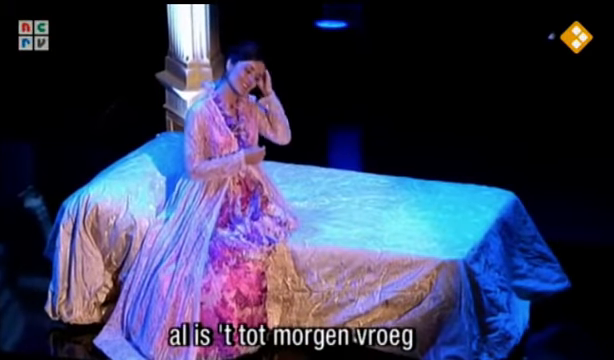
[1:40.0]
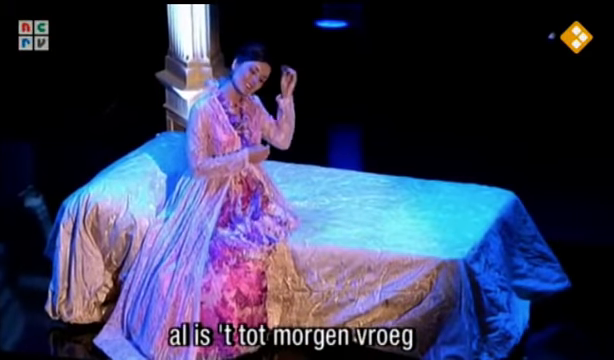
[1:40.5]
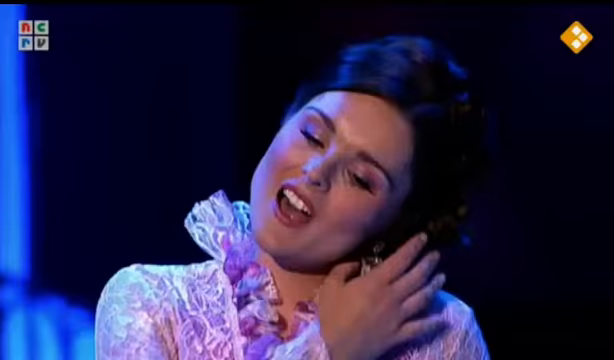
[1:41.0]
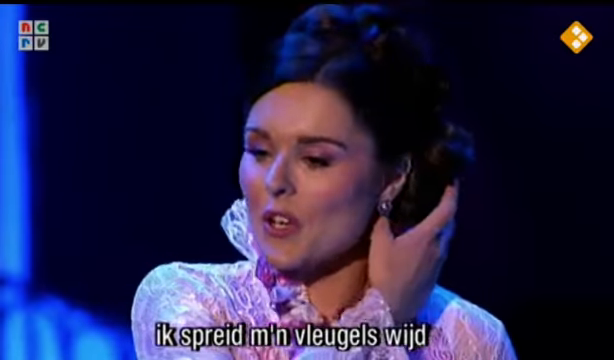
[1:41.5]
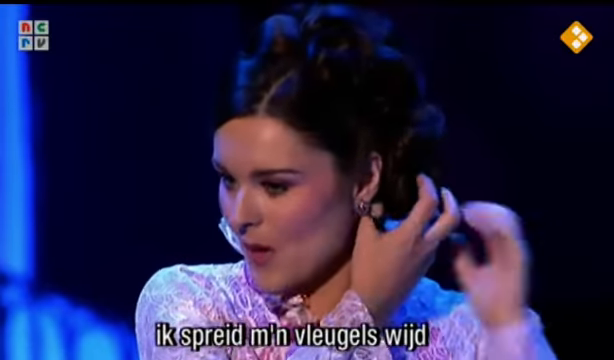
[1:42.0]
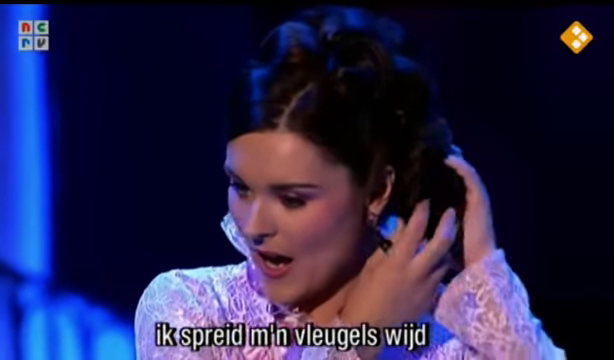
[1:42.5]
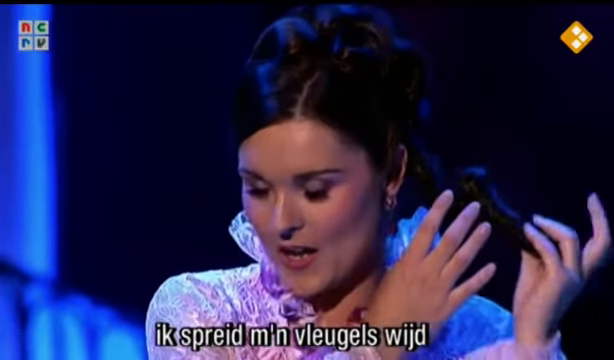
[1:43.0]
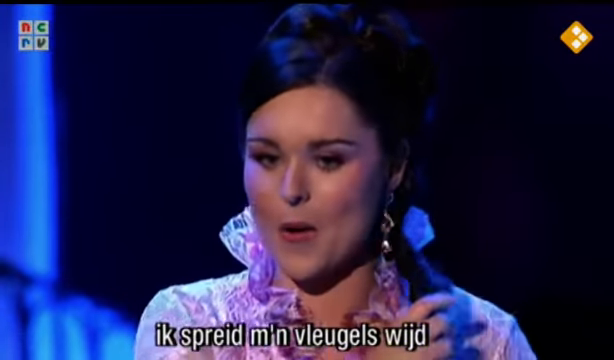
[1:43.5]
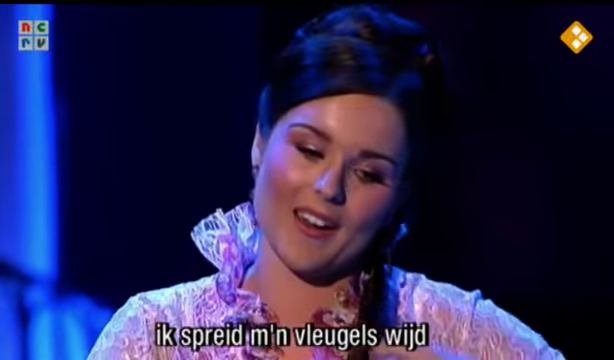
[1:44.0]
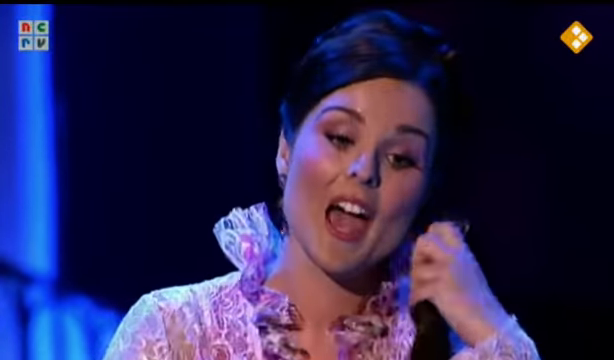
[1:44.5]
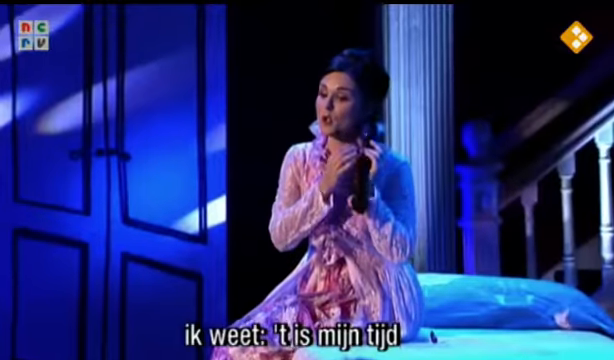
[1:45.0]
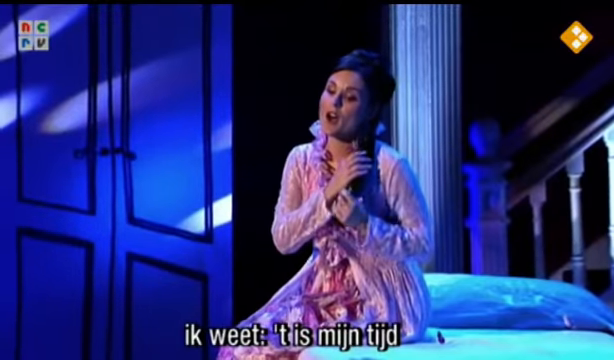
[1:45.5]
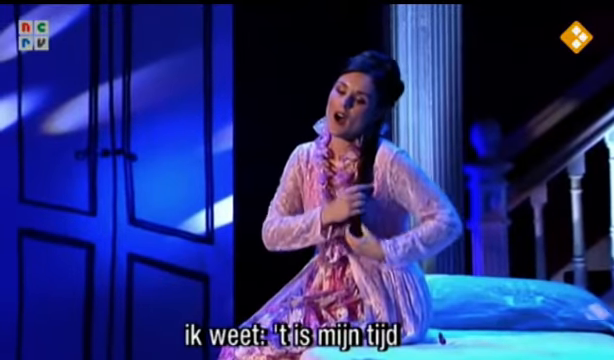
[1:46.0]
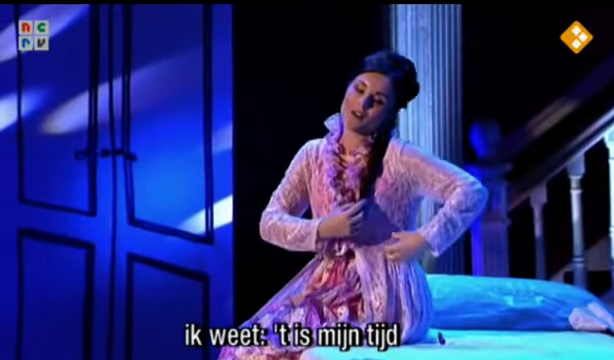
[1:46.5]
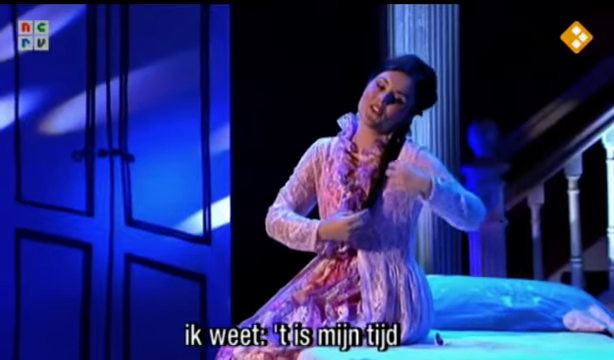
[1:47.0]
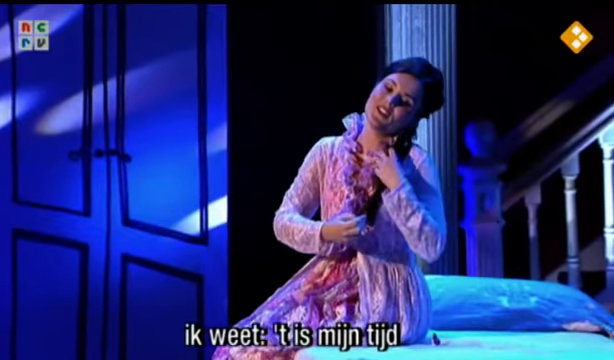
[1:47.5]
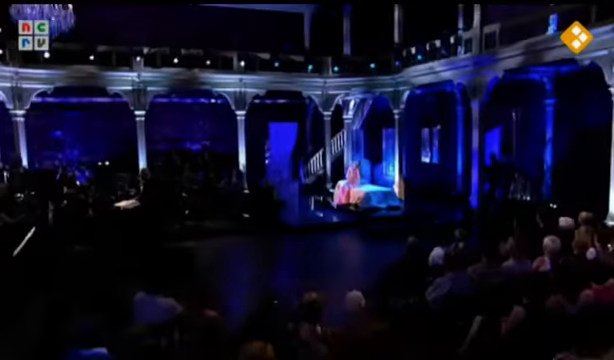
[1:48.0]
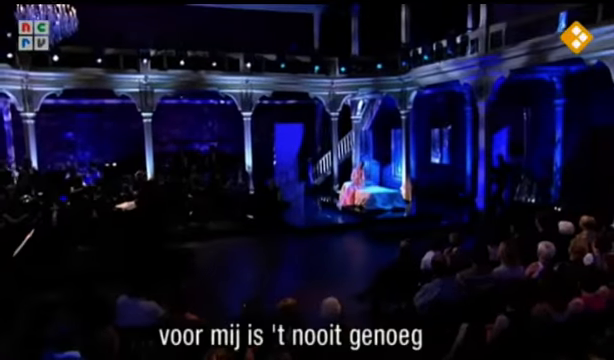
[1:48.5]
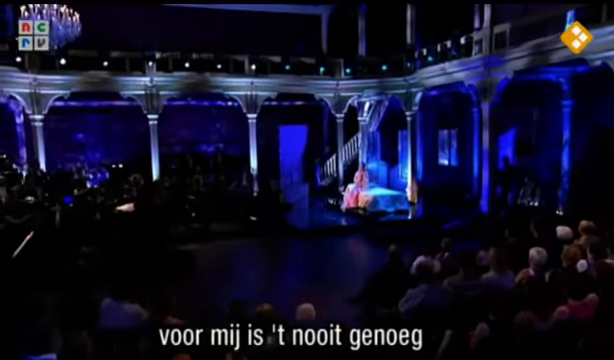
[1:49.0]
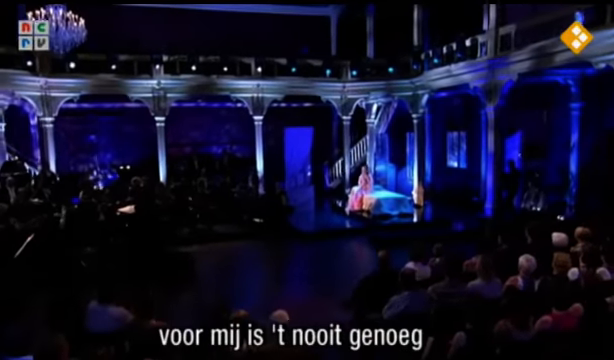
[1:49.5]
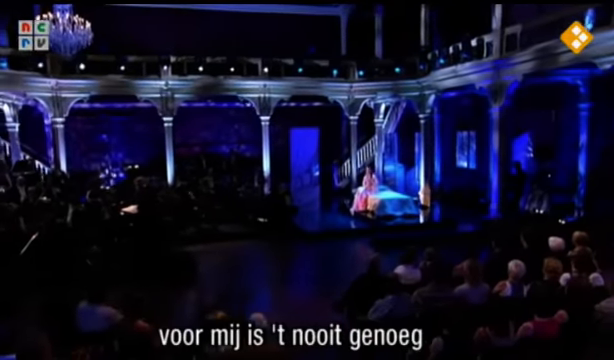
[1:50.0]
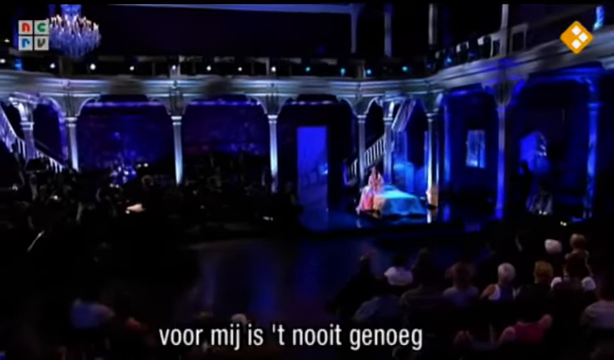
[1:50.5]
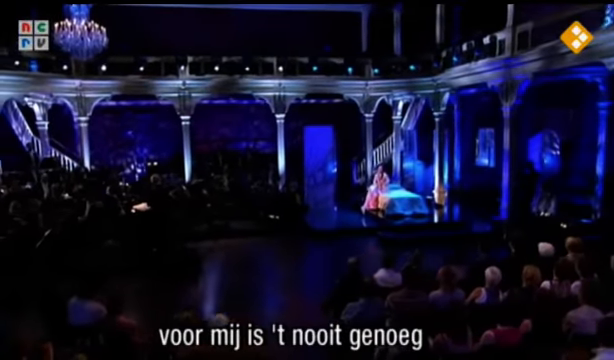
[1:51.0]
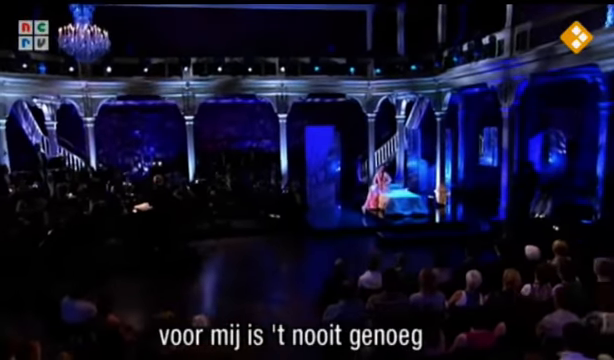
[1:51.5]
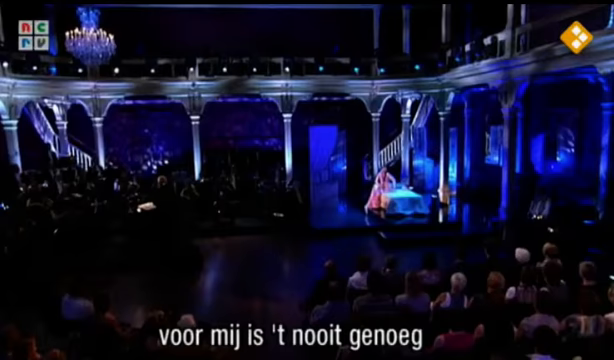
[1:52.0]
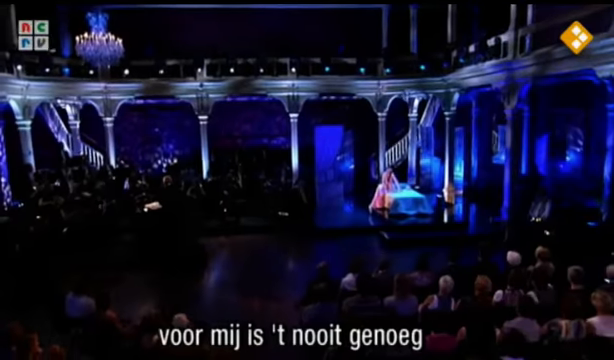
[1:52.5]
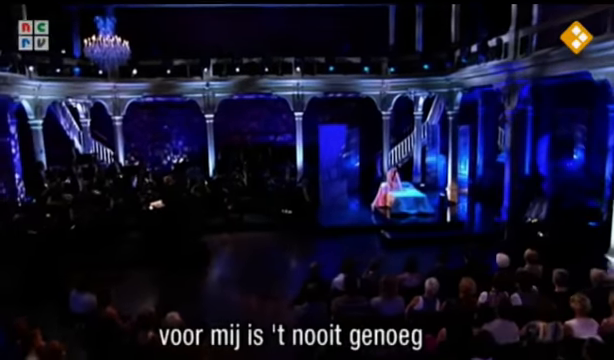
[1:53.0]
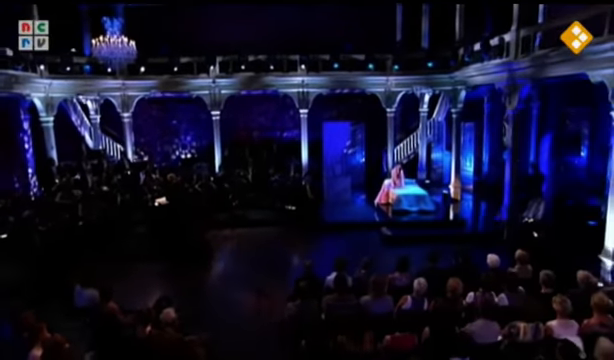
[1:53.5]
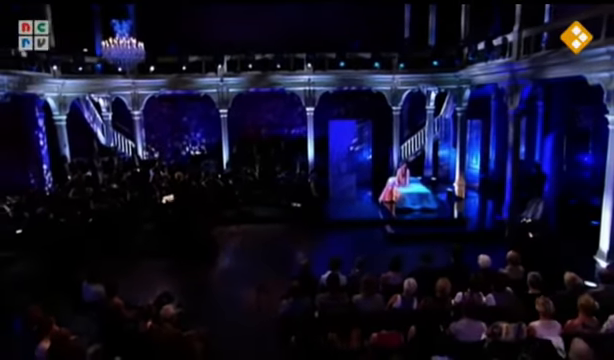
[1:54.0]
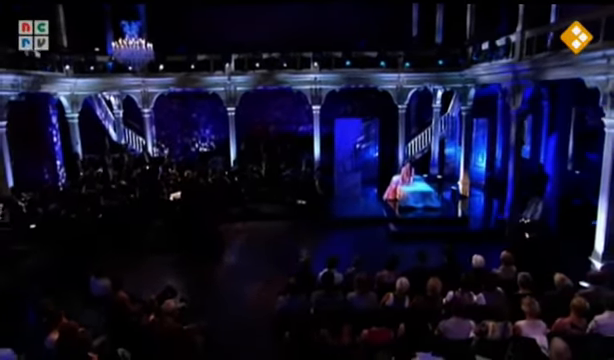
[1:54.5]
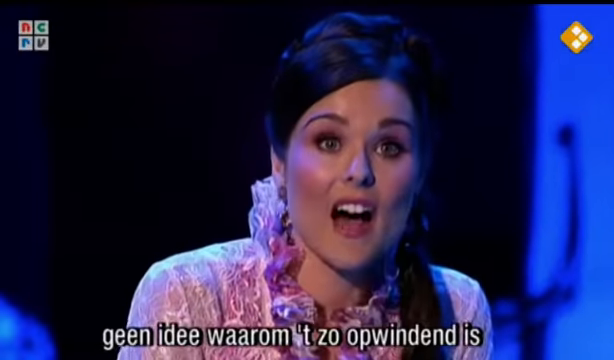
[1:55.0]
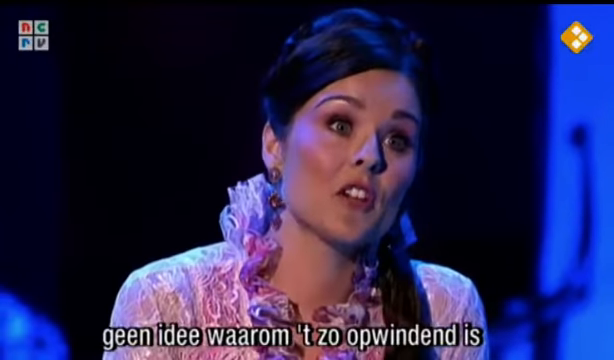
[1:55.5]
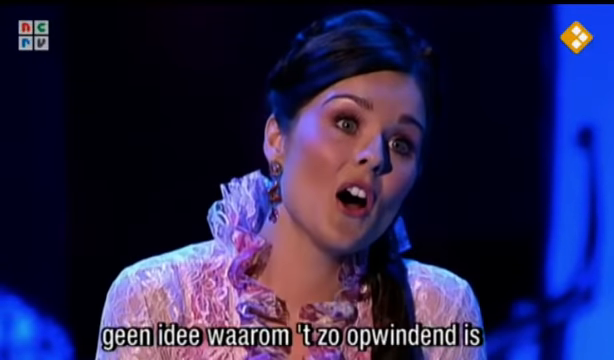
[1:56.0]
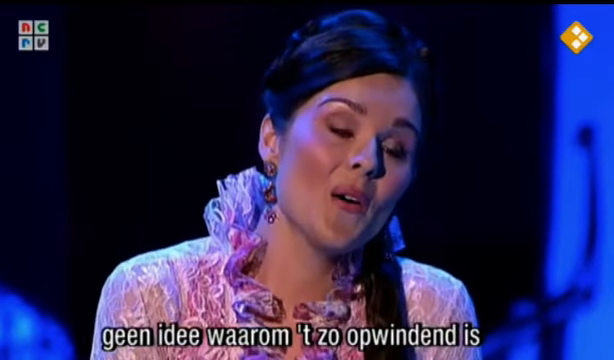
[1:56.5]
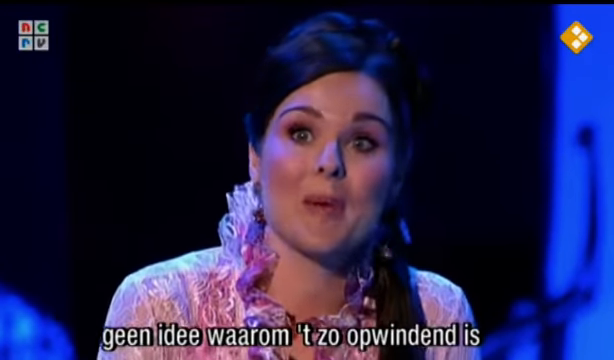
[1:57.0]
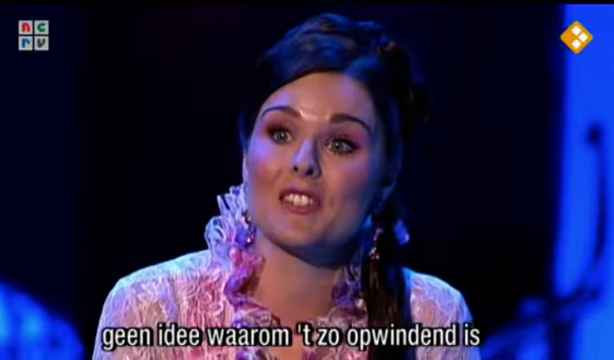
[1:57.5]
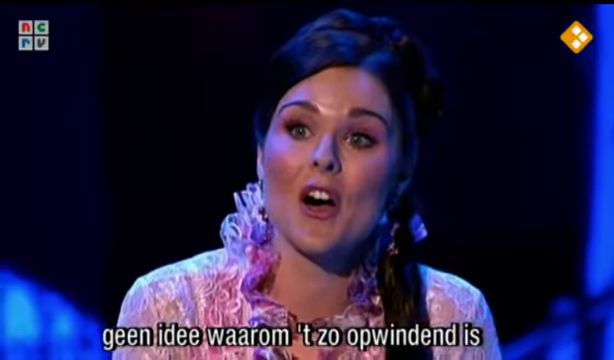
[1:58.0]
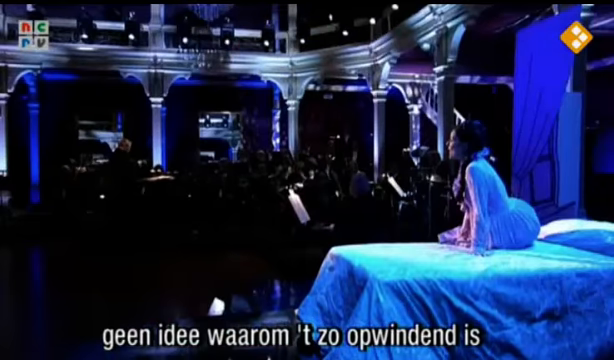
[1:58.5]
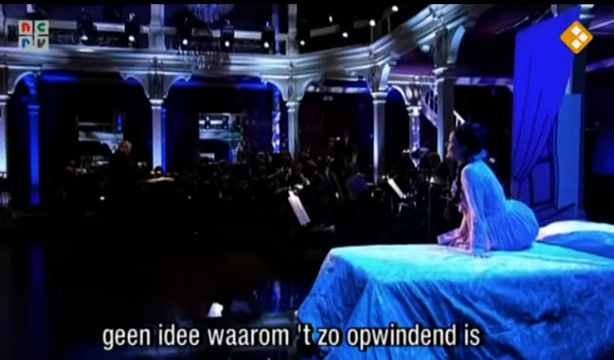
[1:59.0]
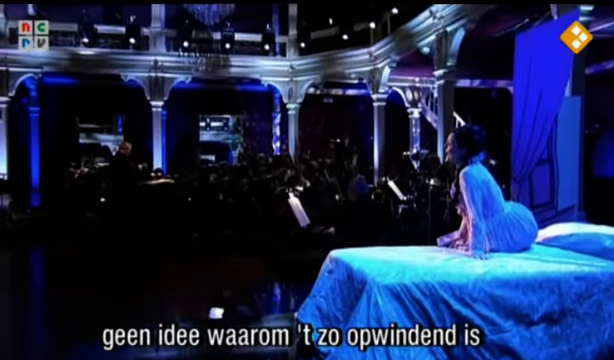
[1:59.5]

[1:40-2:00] The singer sits on the bed and, while singing, pulls pins out of her hair, takes down large buns, and starts combing out her long hair. A distant view shows more of the auditorium, with many people sitting on all sides of the stage and what seems to be a second-floor area. The room is fairly dark; the only light is a bluish purple light from the stage and the spotlight on the singer sitting on the bed. She keeps singing as her large blue eyes gaze out into the crowd, seeming to sing as if to a lost love or yearning for something.